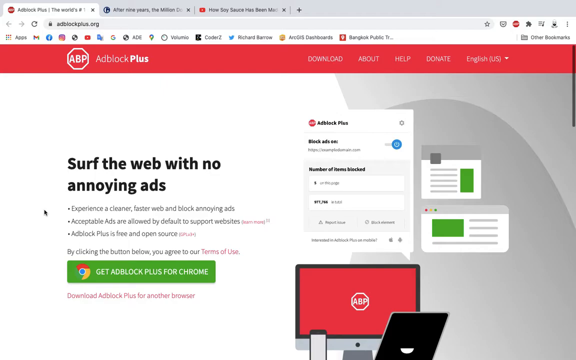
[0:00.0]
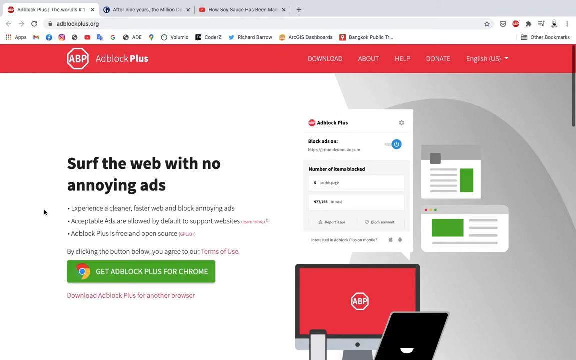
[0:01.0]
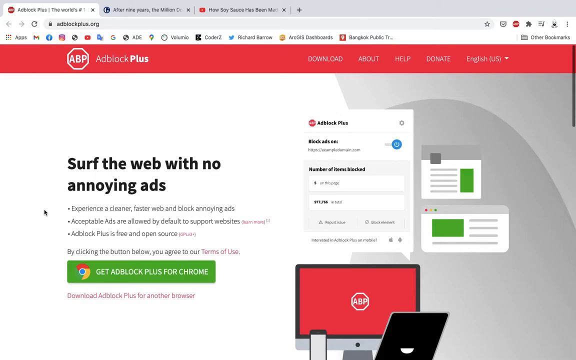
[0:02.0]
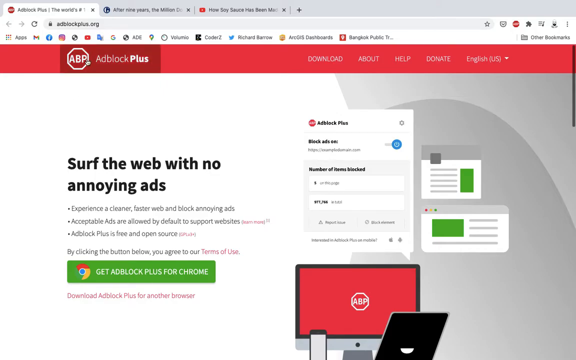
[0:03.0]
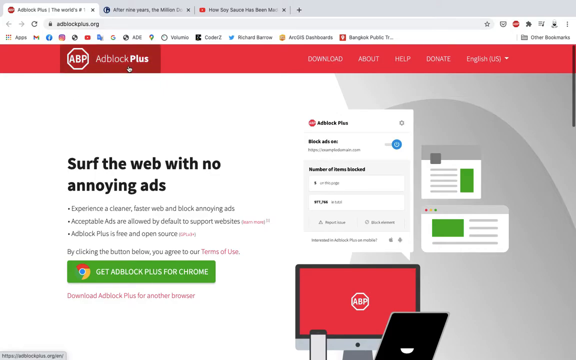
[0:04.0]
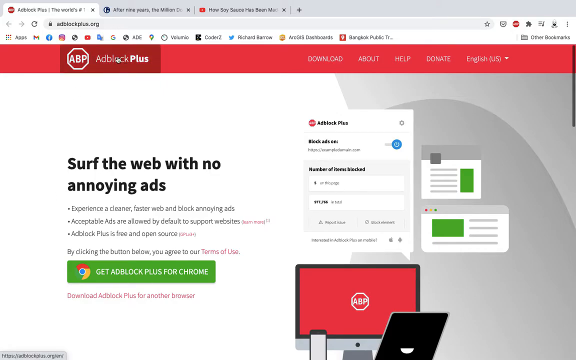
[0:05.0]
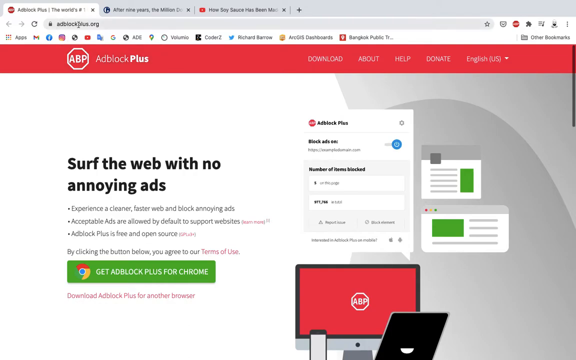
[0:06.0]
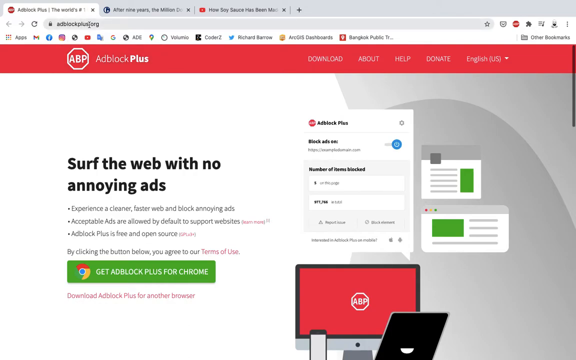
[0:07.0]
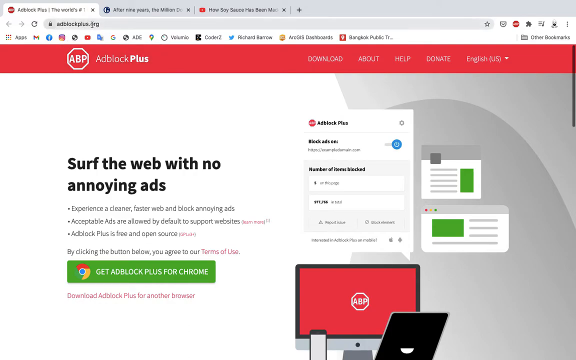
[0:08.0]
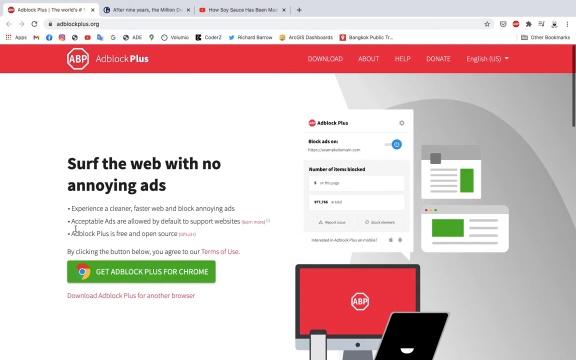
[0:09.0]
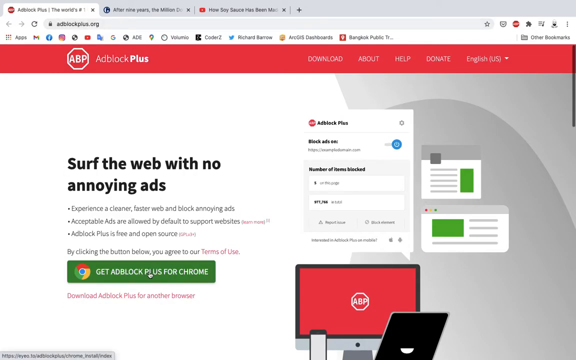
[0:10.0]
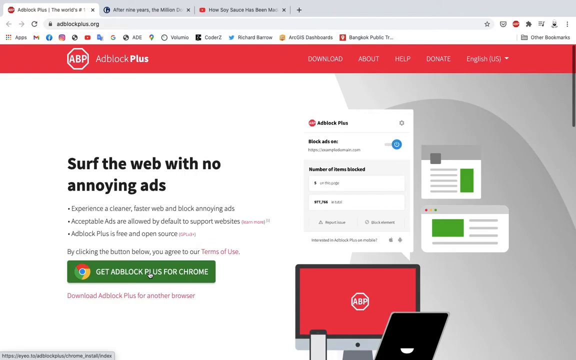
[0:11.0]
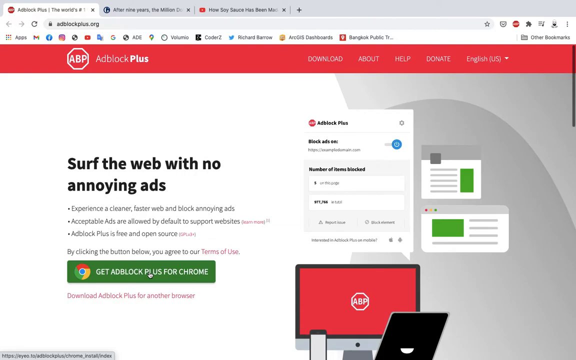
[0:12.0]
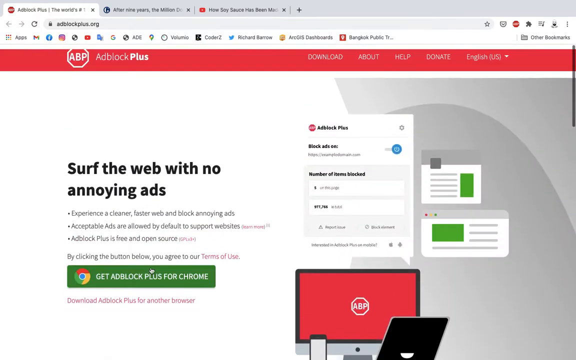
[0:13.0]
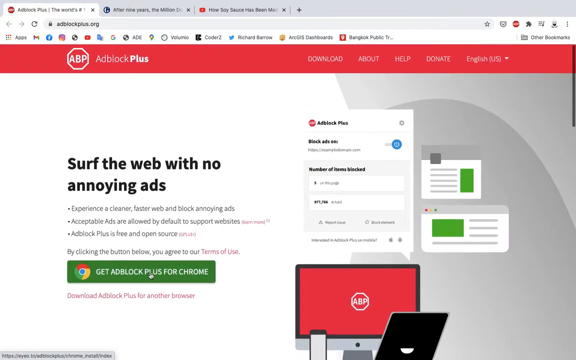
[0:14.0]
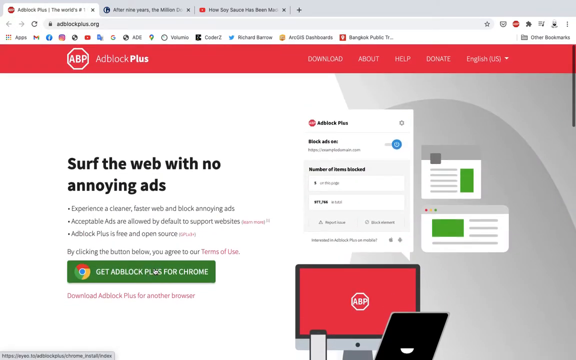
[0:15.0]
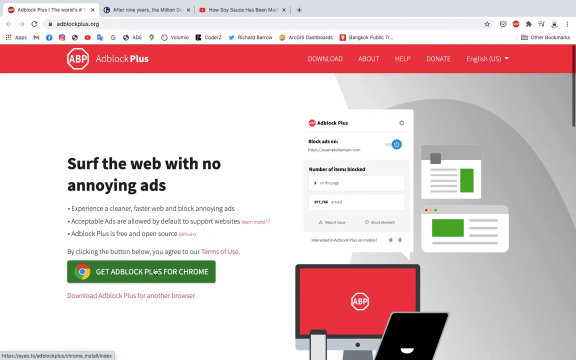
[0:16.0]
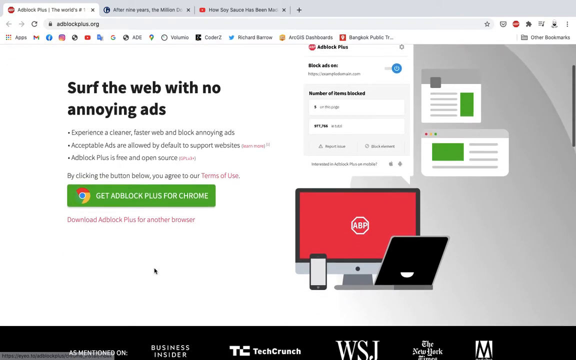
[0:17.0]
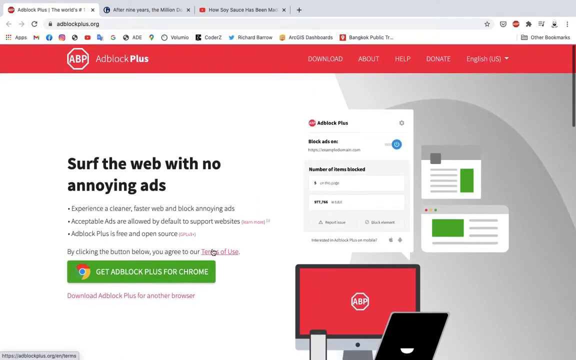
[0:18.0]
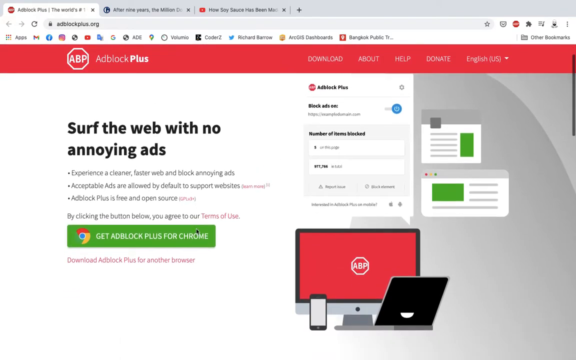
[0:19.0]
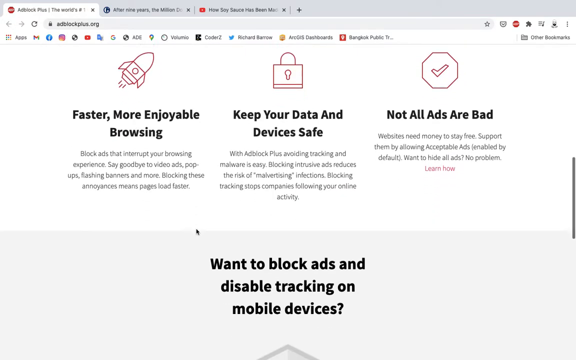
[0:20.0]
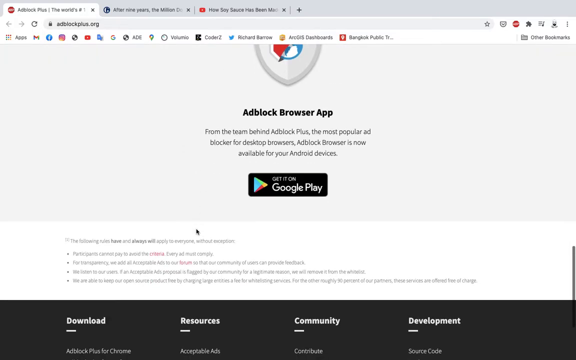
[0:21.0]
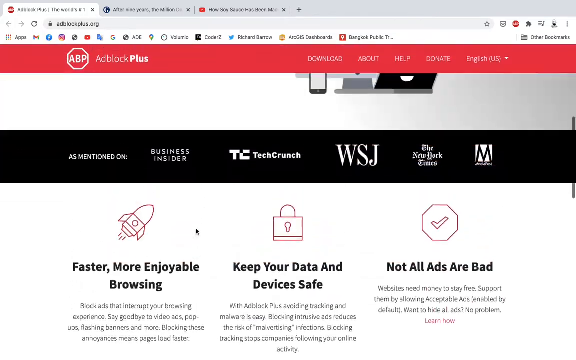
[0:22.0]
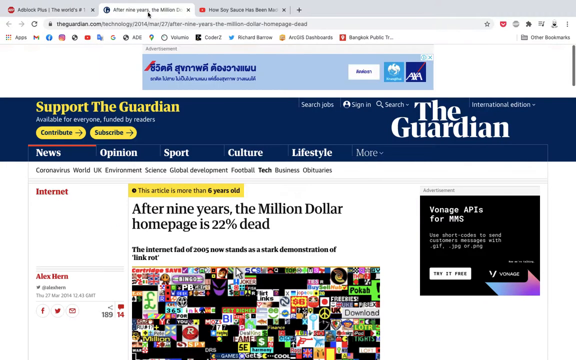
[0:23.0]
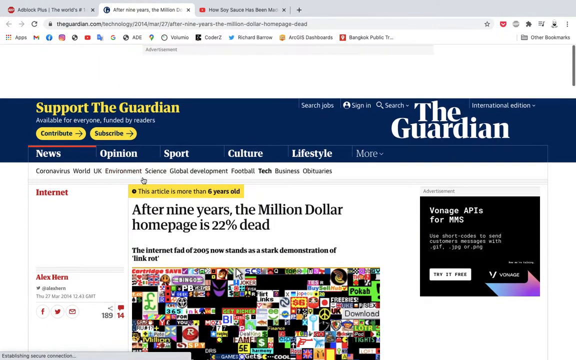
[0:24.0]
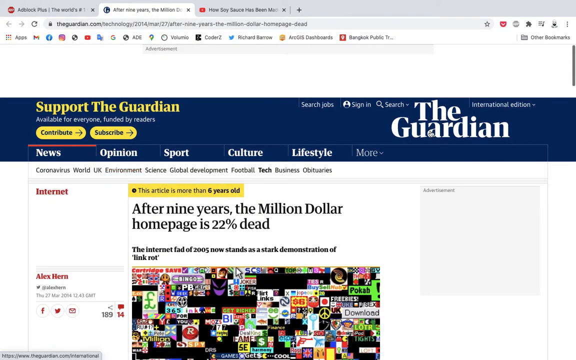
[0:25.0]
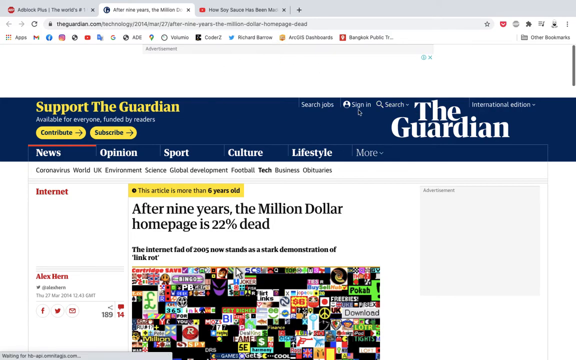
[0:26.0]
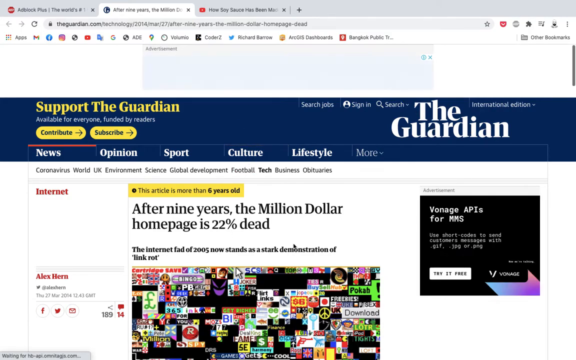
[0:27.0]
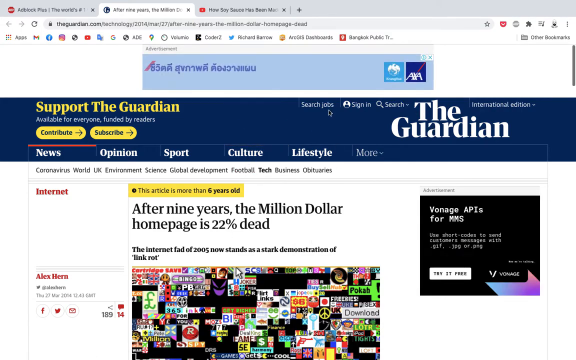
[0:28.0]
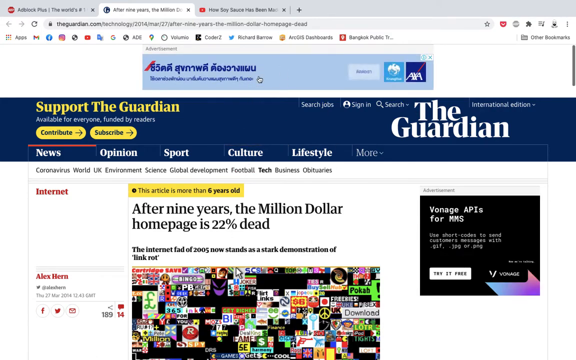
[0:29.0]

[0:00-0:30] This appears to be a tutorial video for a product called Adblock Plus. A screenshot of a web page is shown, with a mouse cursor moving around it. The cursor points to a green call-to-action button that has a Google Chrome logo on its left and the all-caps text "GET ADBLOCKPLUS FOR CHROME". To the right of the button is an image of a laptop and a screen showing the ABP logo for AdBlock Plus on a mostly red screen, with a chat bubble coming from the laptop that shows one of AdBlock Plus's features. At the top of the website is a red main navigation bar, and on its right side are five navigation items in all caps: "Download", "about", "help", "donate", and "English" with "US" in brackets, indicating a language option. The page then scrolls down to show benefits of AdBlock Plus, including "faster, more enjoyable browsing", "keep your data and devices safe" and "not all ads are bad", each with a short paragraph below it, followed by a slightly larger, center-aligned title that says "want to block ads and disable tracking on mobile devices". A link to the Google Play Store to download the app is briefly visible. A second browser tab is then selected, showing the Guardian website.